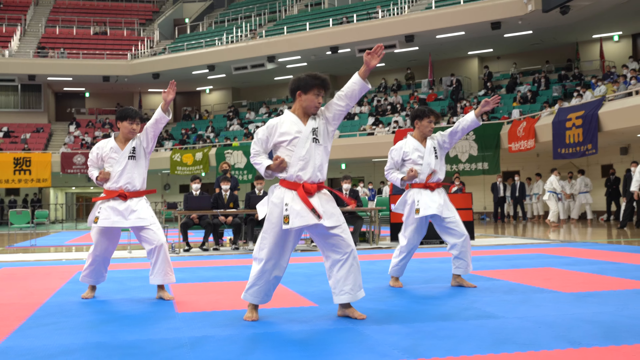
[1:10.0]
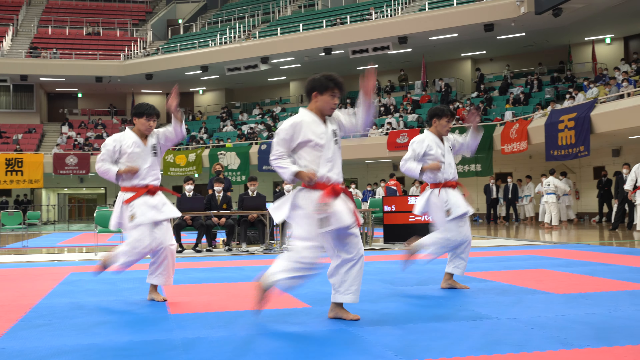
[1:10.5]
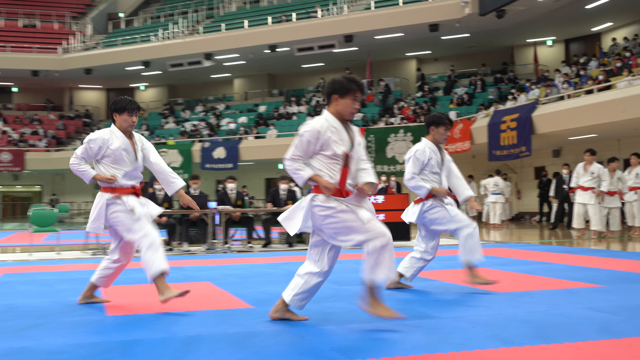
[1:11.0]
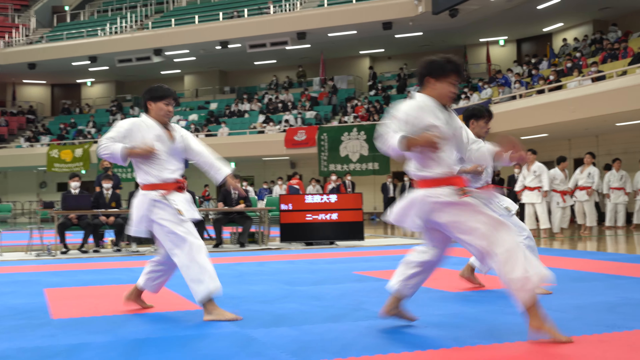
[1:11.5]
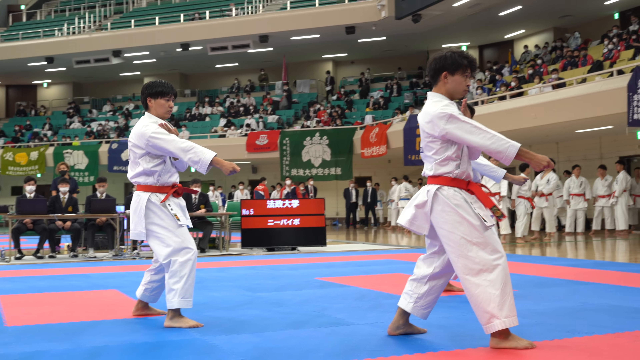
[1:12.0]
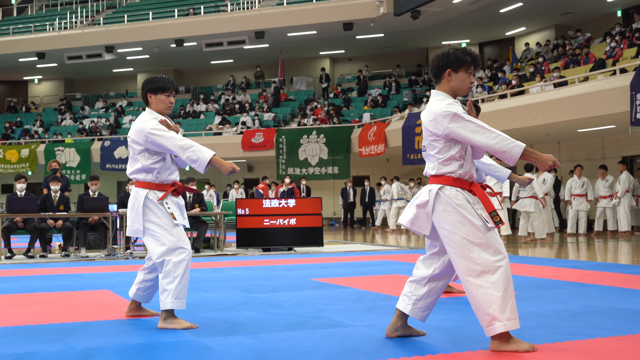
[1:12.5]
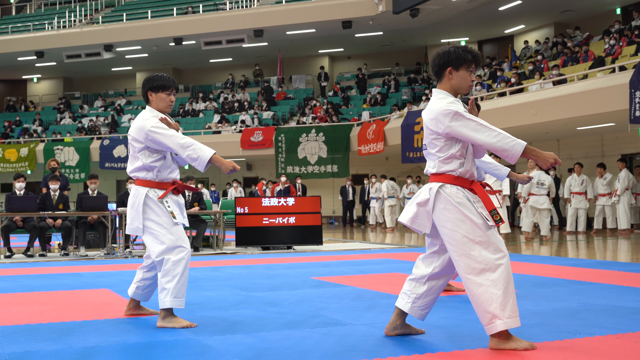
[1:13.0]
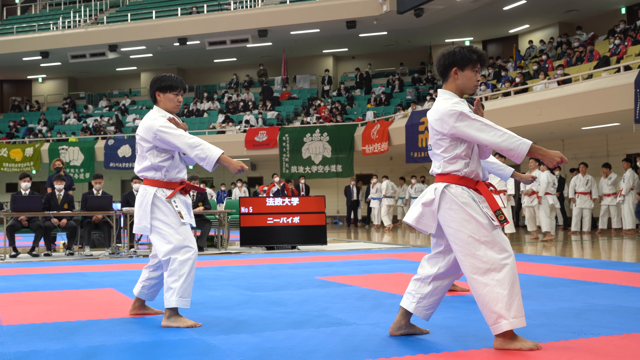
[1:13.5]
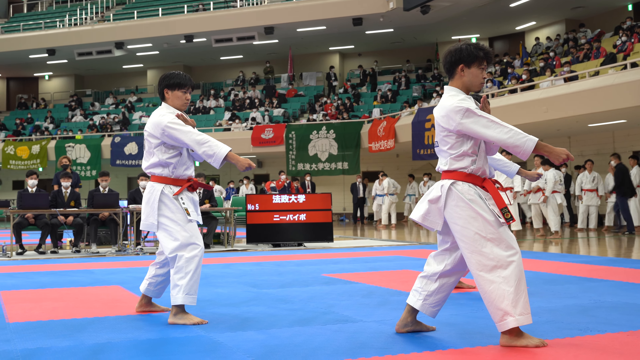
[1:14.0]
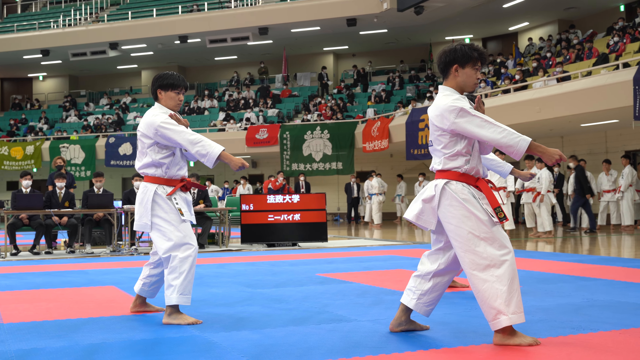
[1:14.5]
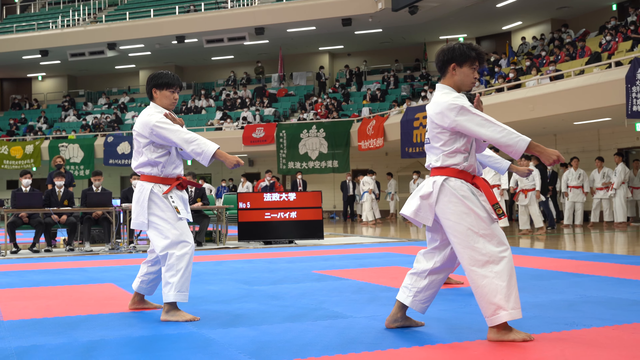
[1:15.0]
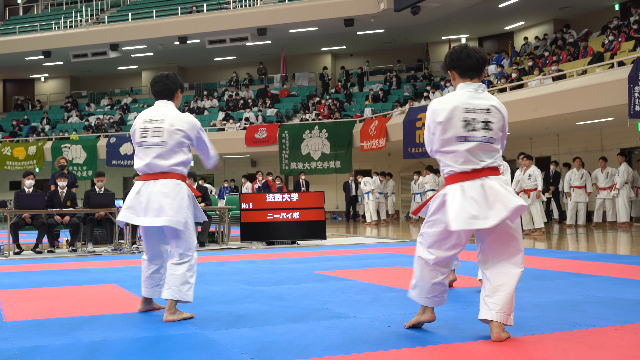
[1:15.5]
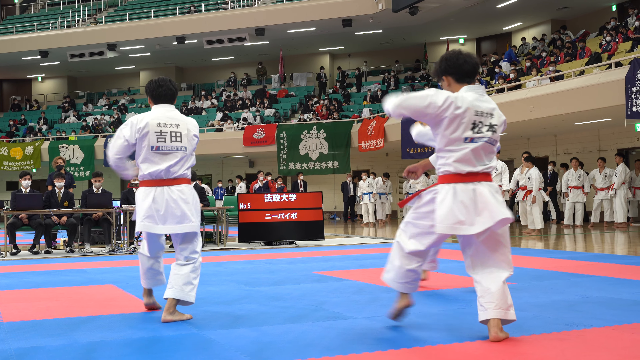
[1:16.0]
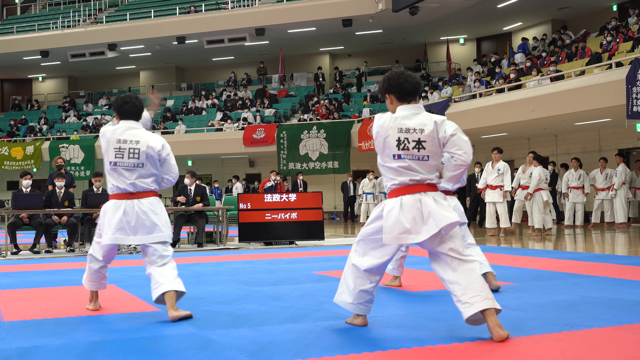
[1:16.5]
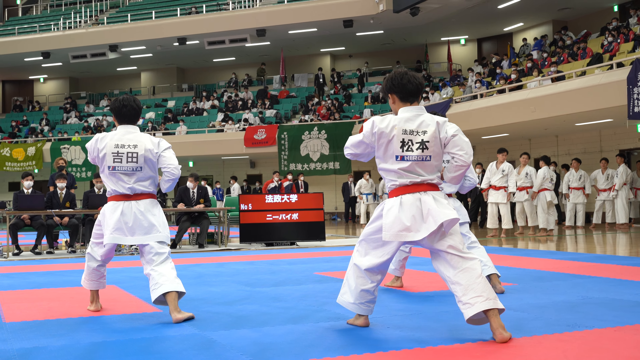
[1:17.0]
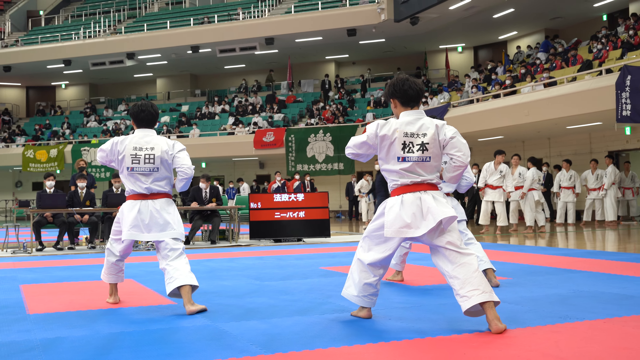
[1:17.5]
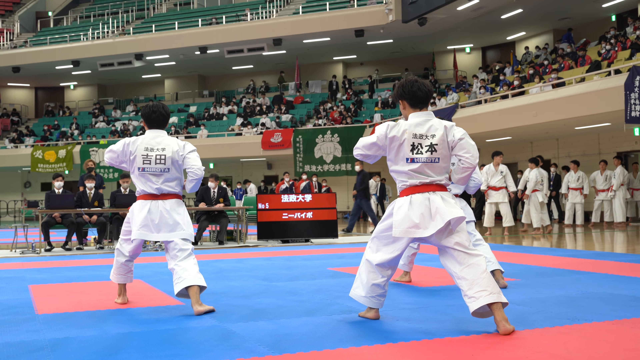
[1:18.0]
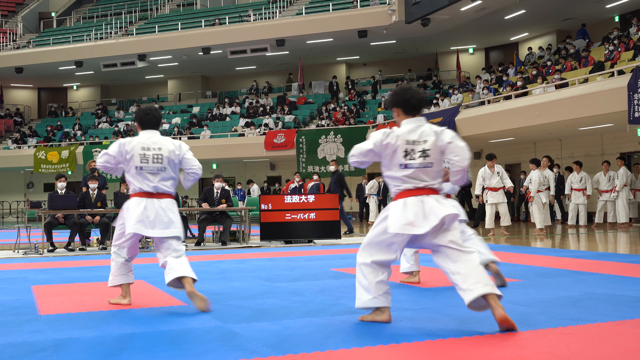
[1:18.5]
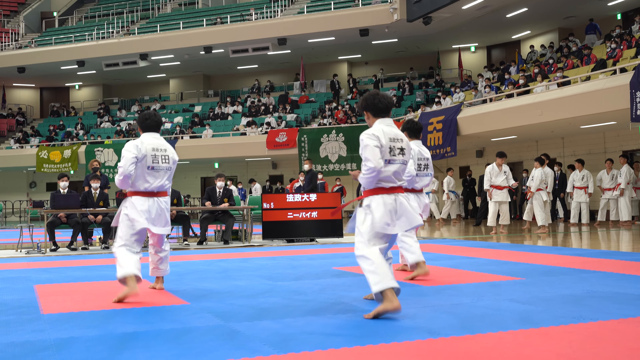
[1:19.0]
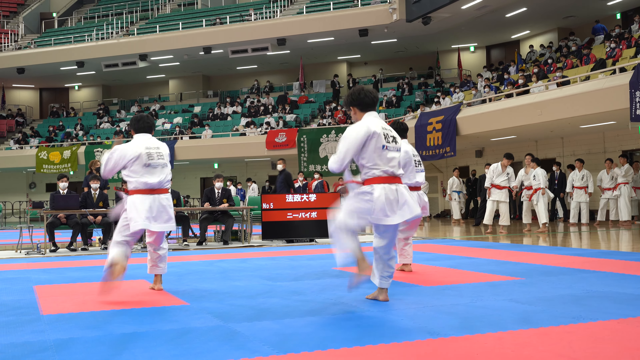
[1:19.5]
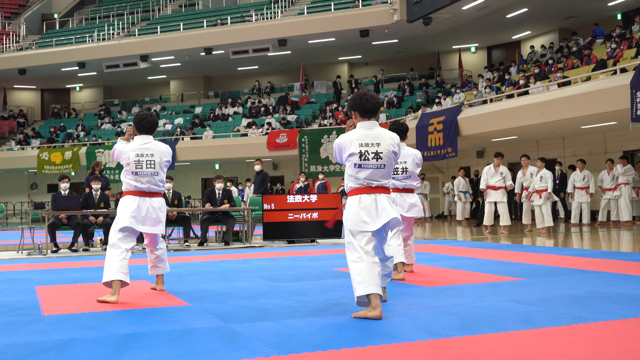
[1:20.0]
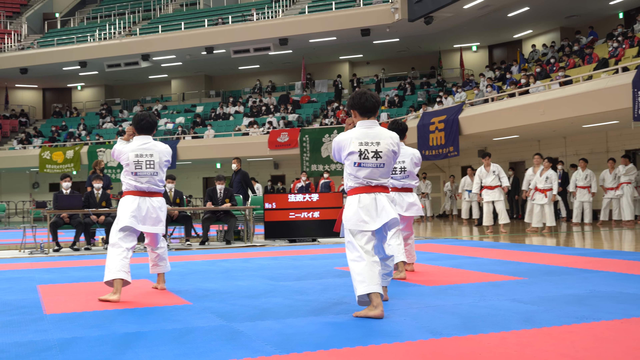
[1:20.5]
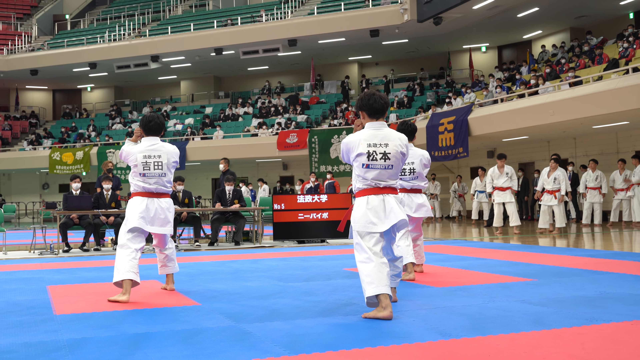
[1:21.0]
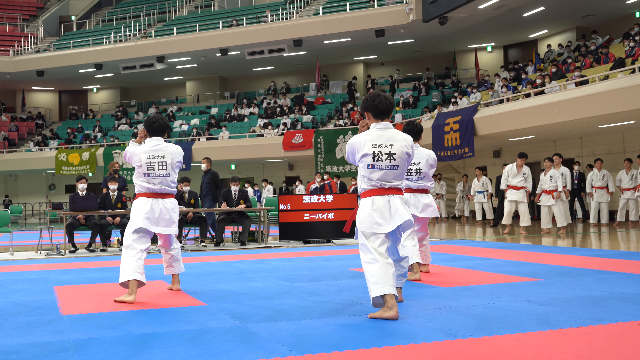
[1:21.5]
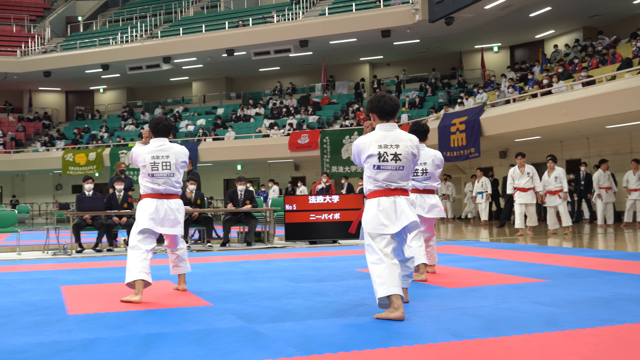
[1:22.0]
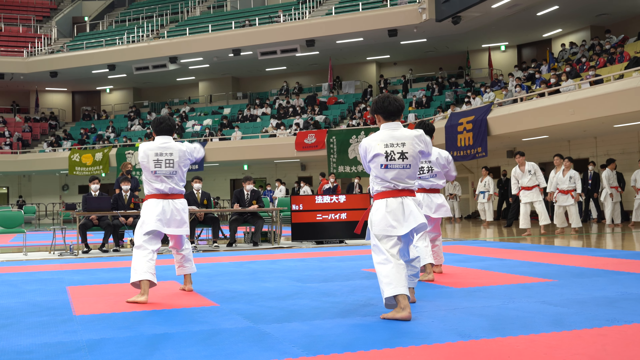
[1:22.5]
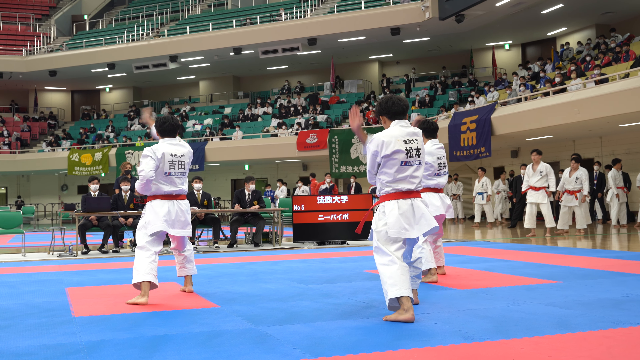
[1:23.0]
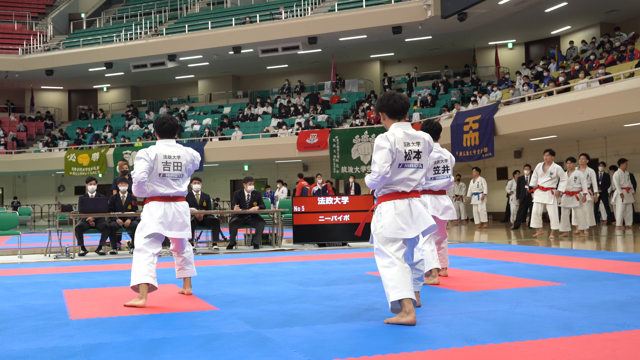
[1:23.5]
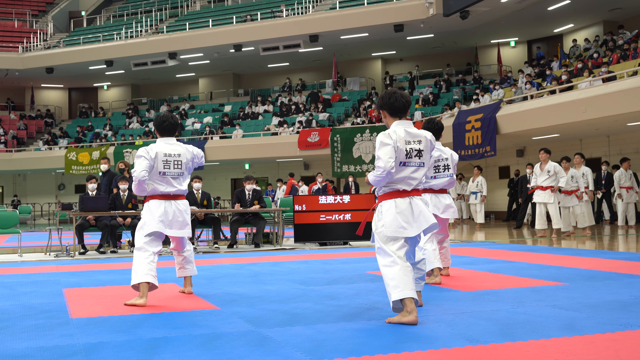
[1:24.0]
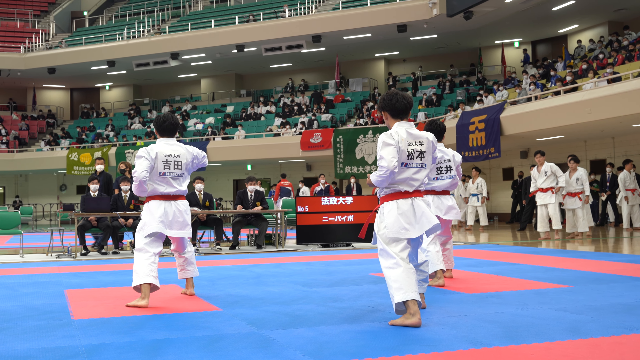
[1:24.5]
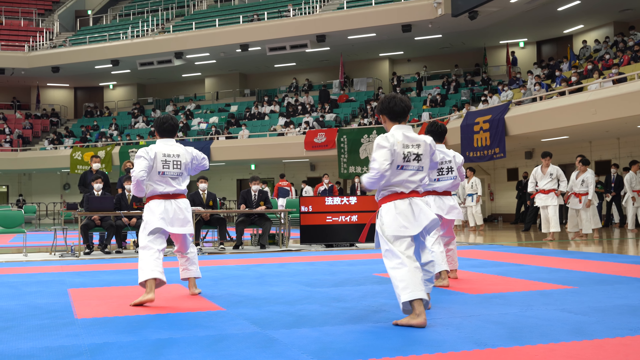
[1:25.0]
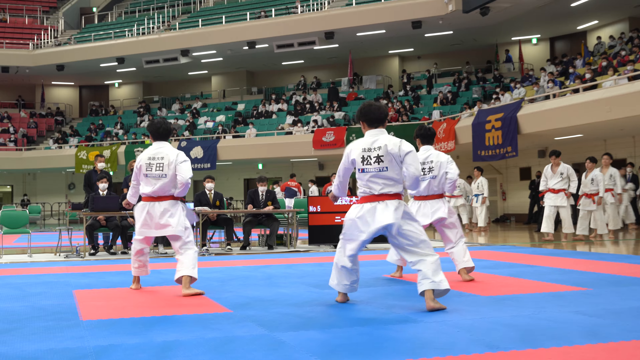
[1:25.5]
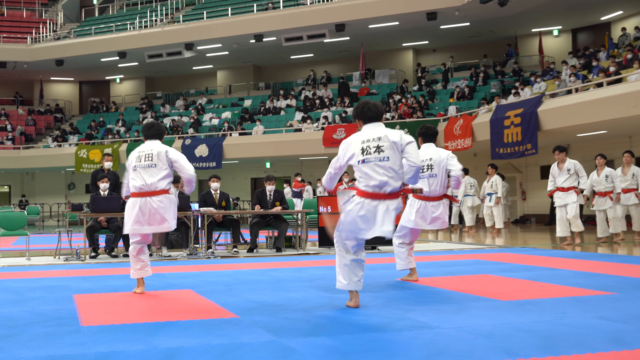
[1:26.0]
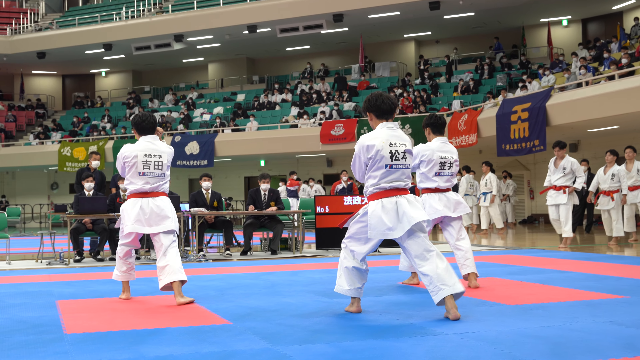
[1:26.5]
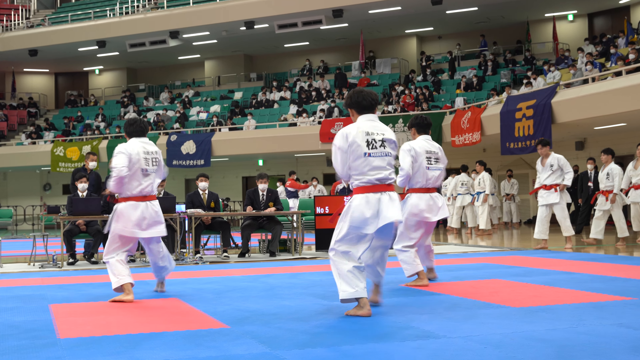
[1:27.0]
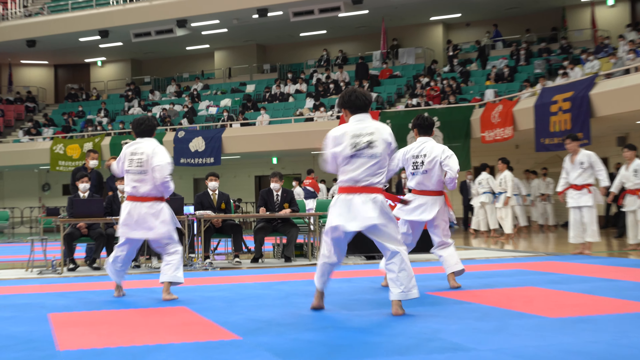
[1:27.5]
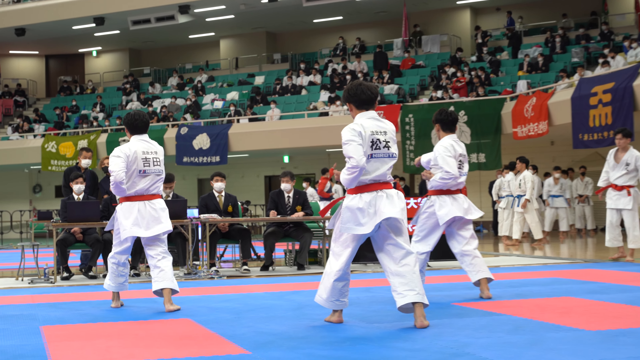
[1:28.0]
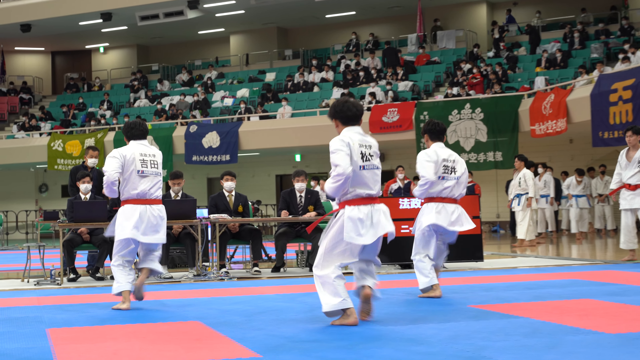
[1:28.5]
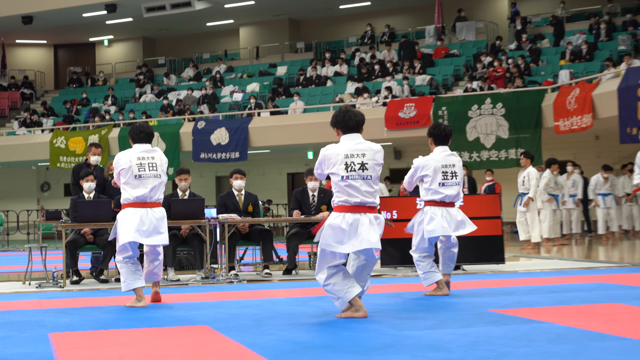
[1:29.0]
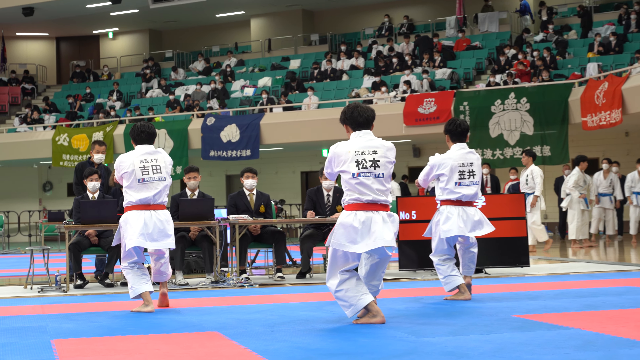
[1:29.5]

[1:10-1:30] From the arm-up diagonal position, the men do a straight-legged kick and a series of straight-arm punches downward as they move diagonally in unison. They stay still for several beats, then slowly pivot toward the back of the room so their backs are to the camera. One arm comes up and over and slides into the side as they move forward, followed by a kick and punch combination. The right arm comes up straight and over, and they do a series of in-sync moves, kicking, punching straight, and alternating. The movements are sharp and forceful, and the men are perfectly in unison, moving as one; it looks like it took a lot of practice. The crowd is still watching in the background, and the judges are sitting at the table watching.